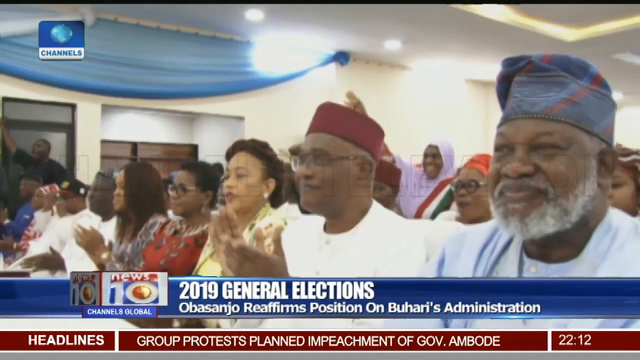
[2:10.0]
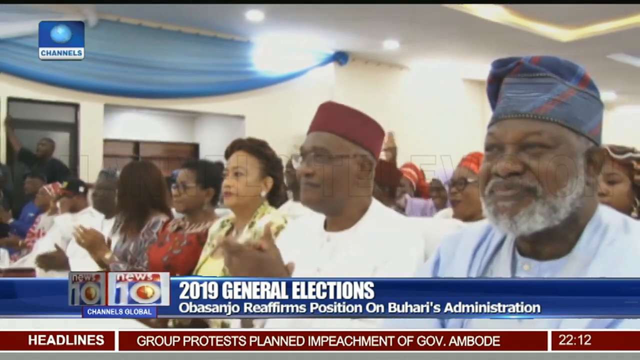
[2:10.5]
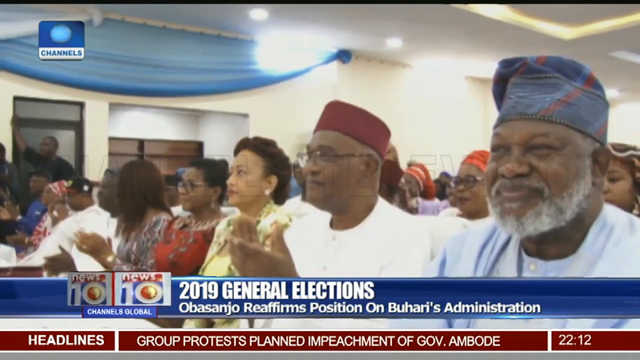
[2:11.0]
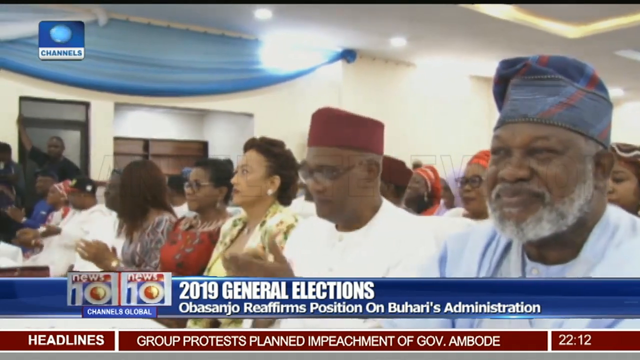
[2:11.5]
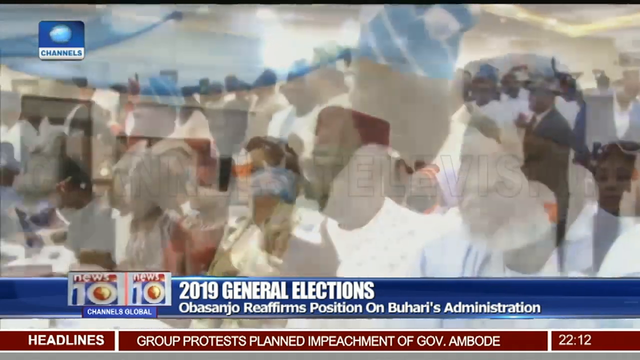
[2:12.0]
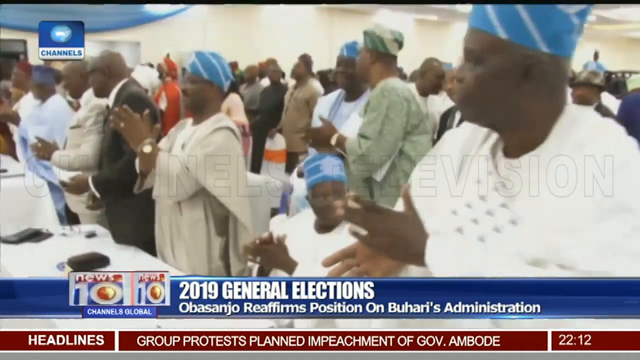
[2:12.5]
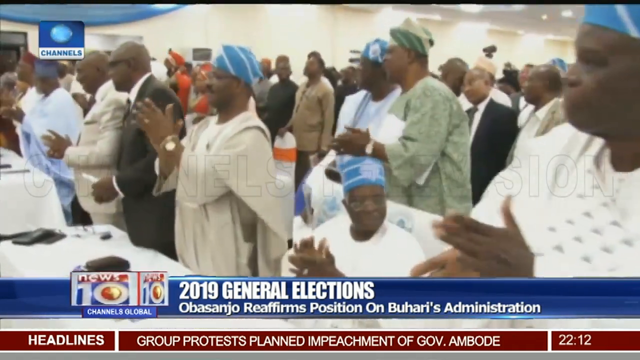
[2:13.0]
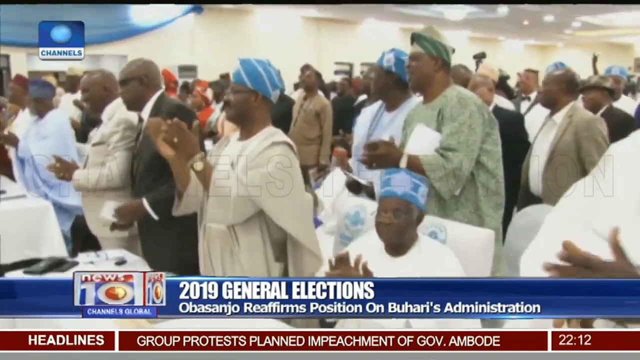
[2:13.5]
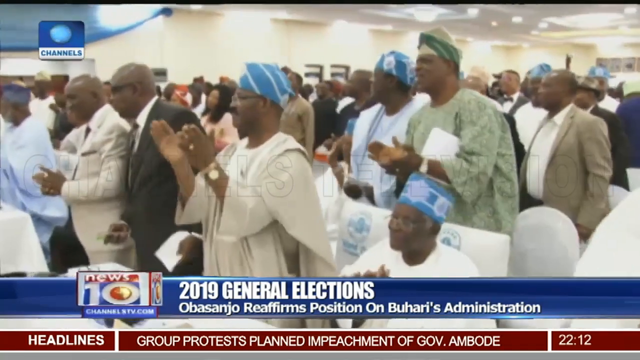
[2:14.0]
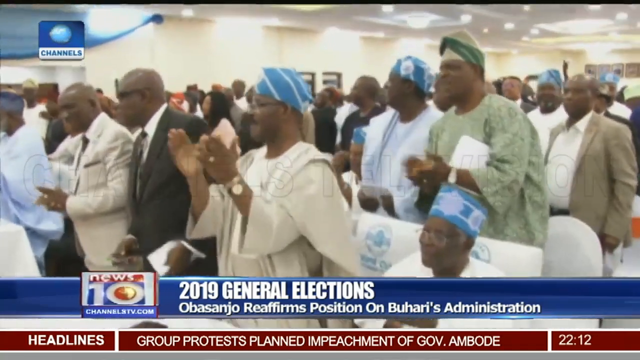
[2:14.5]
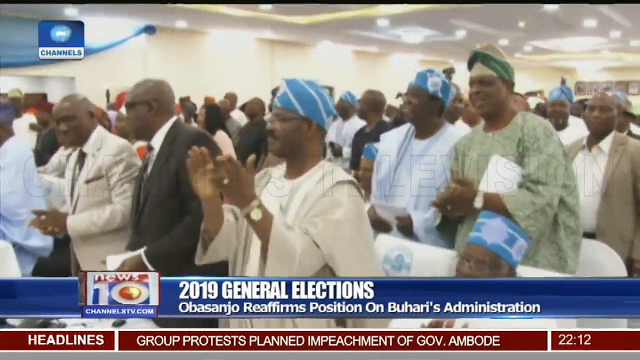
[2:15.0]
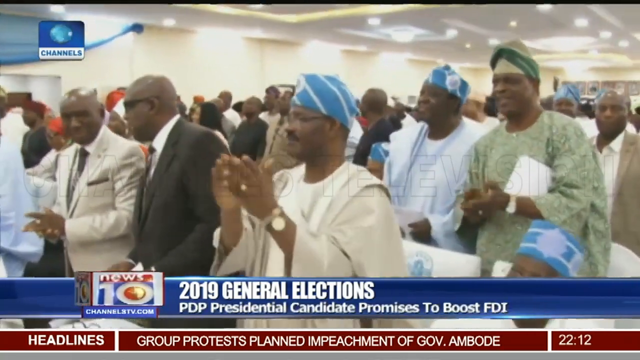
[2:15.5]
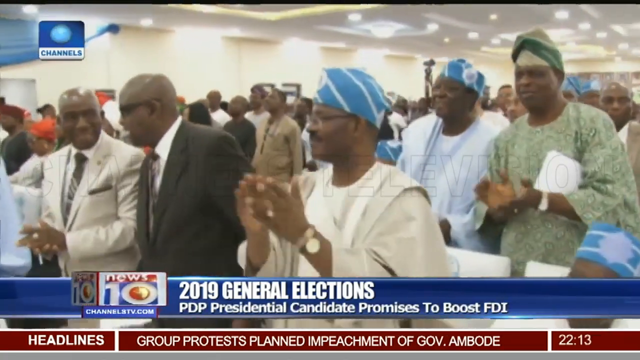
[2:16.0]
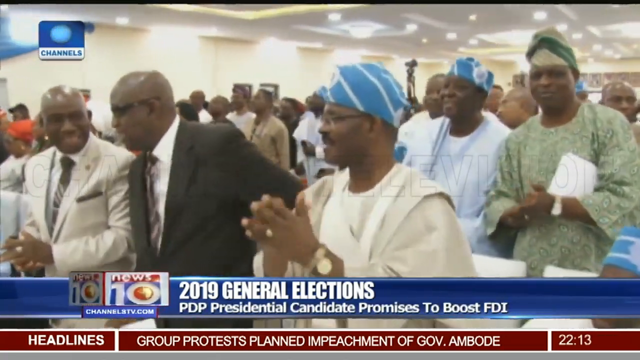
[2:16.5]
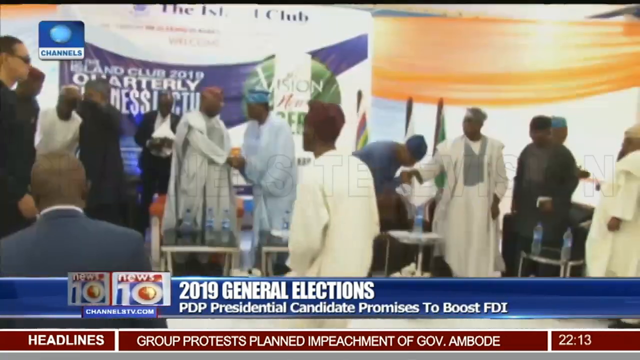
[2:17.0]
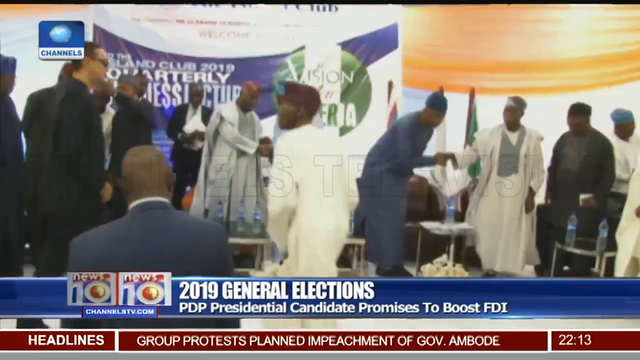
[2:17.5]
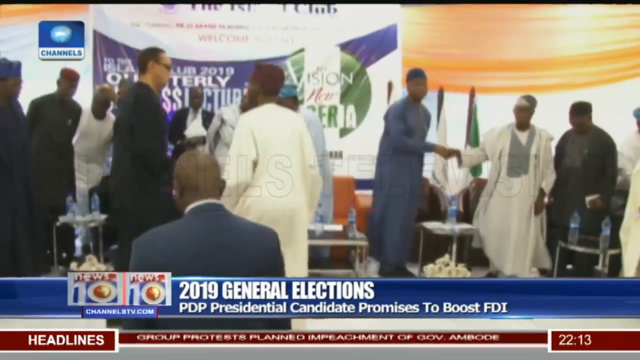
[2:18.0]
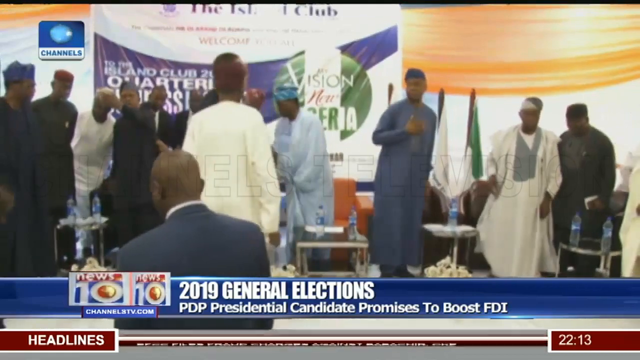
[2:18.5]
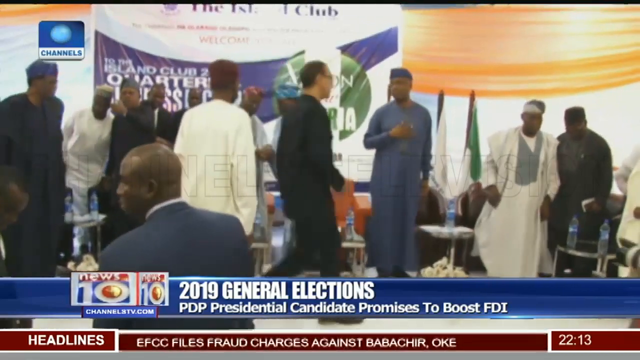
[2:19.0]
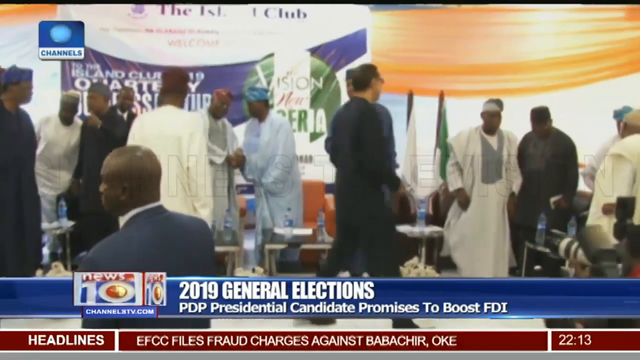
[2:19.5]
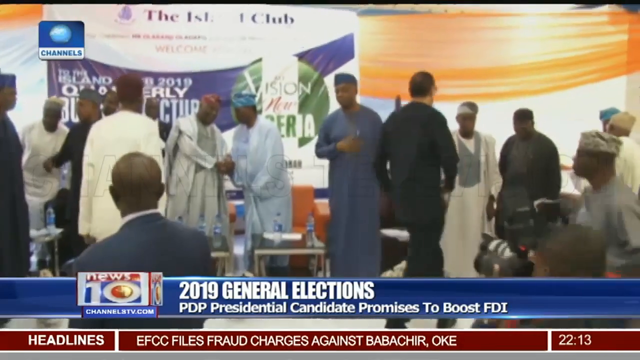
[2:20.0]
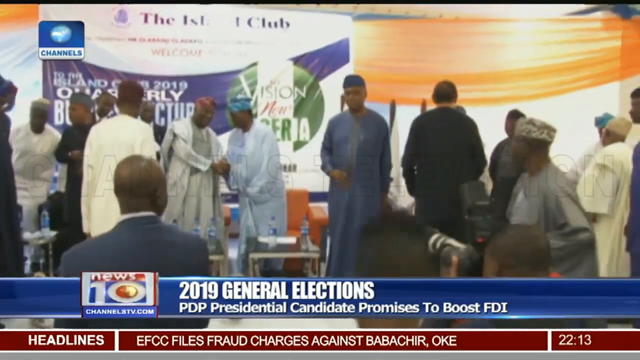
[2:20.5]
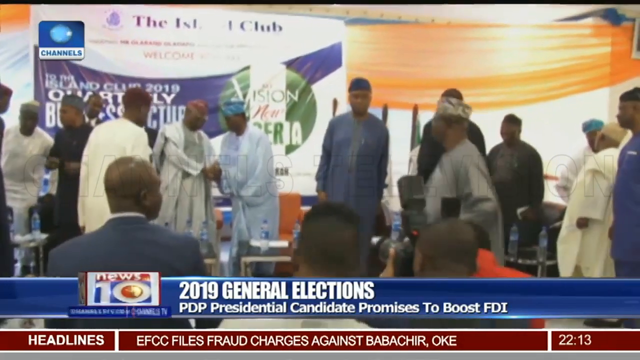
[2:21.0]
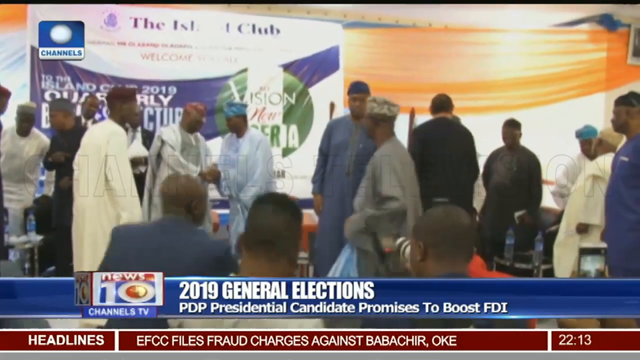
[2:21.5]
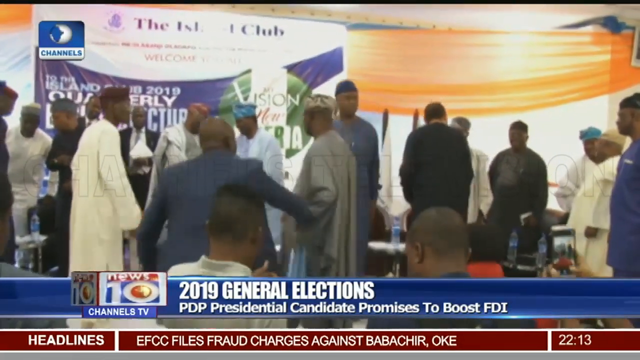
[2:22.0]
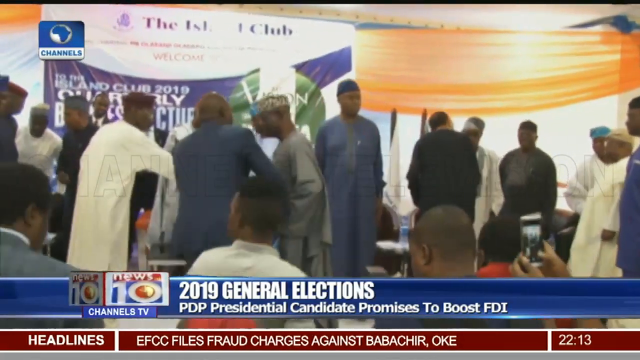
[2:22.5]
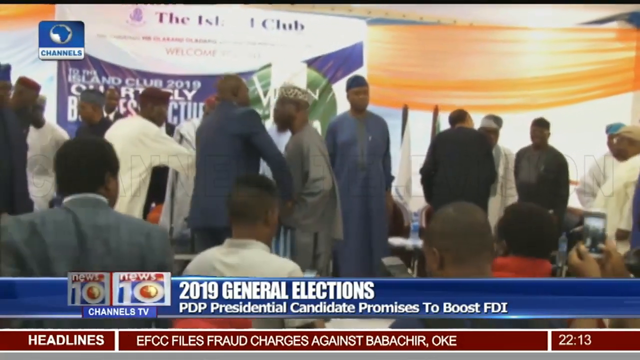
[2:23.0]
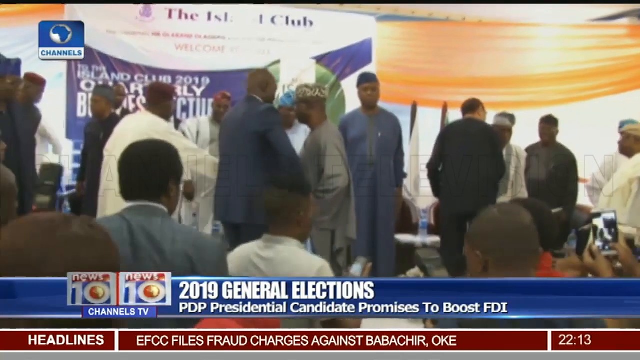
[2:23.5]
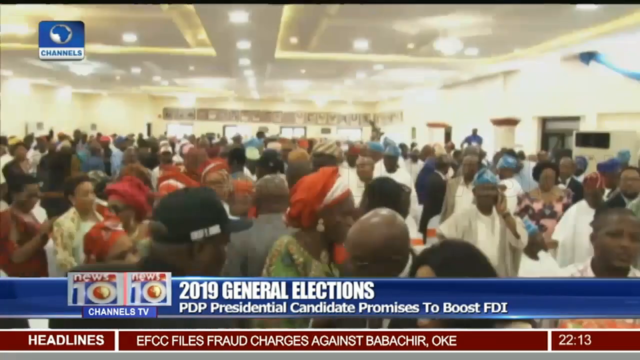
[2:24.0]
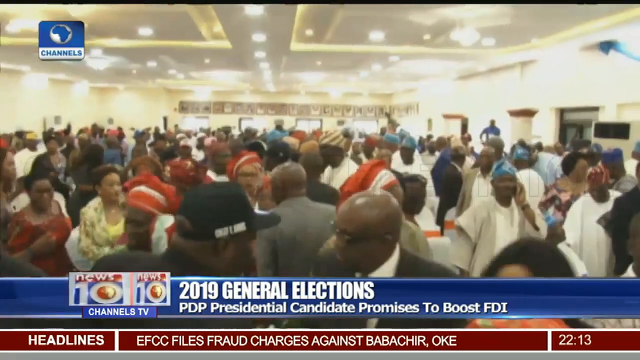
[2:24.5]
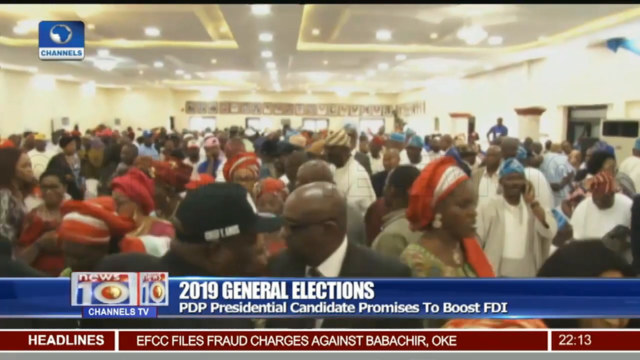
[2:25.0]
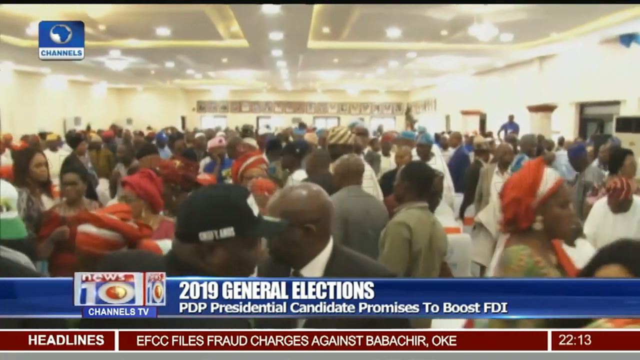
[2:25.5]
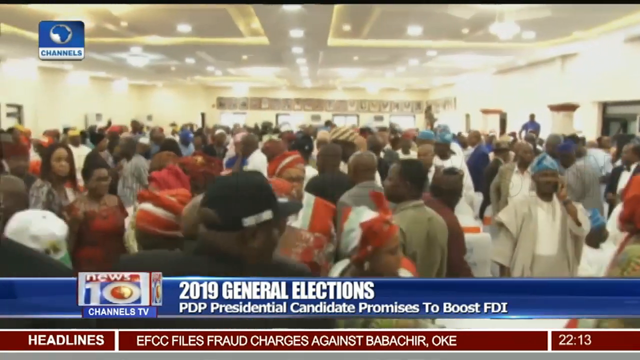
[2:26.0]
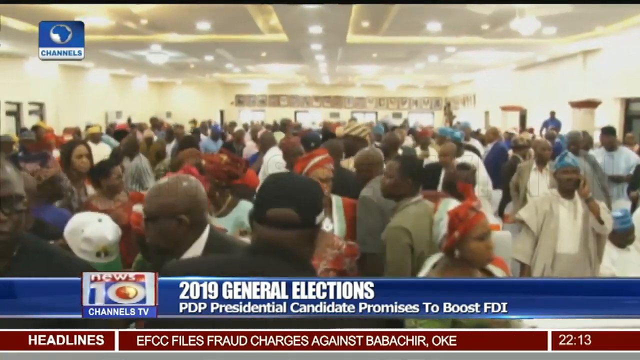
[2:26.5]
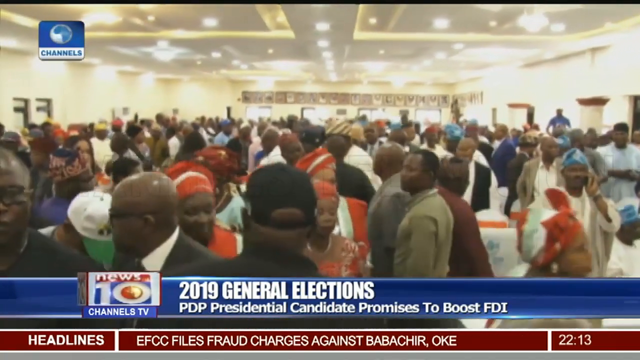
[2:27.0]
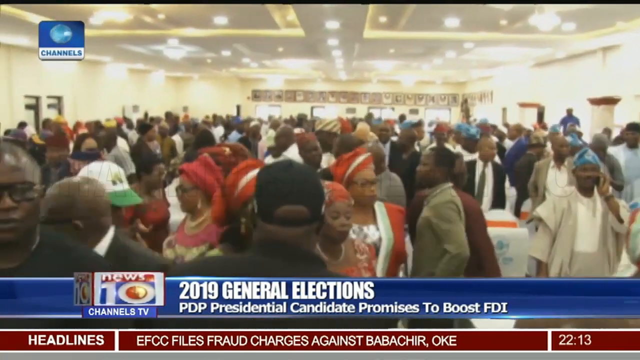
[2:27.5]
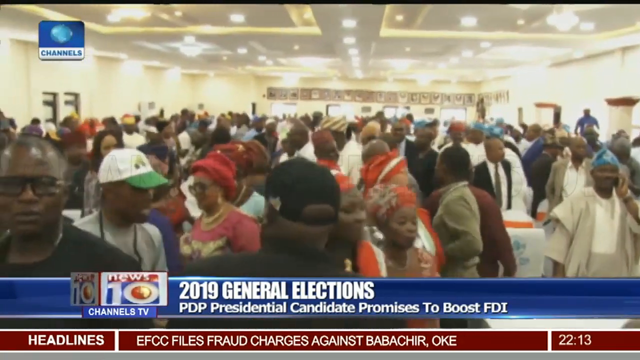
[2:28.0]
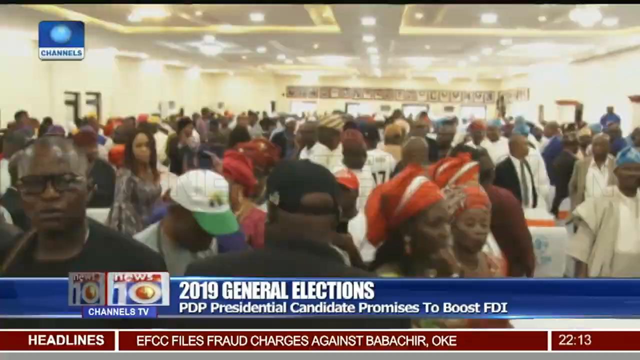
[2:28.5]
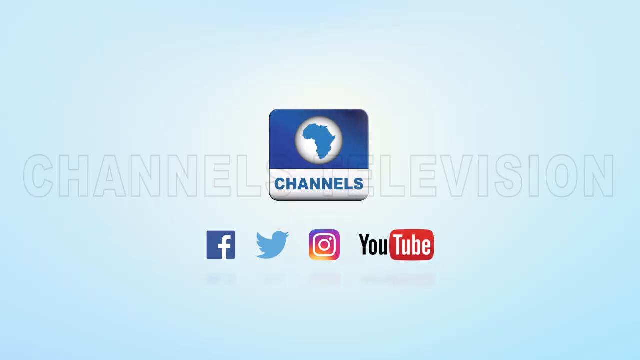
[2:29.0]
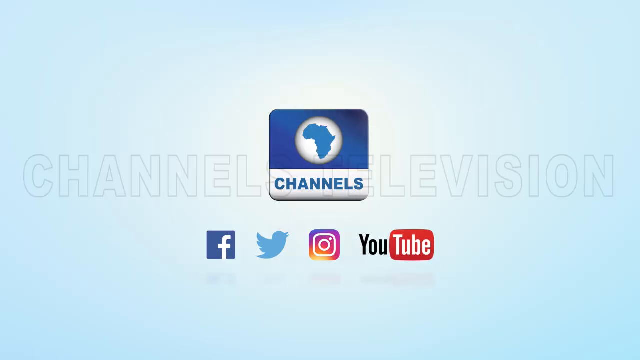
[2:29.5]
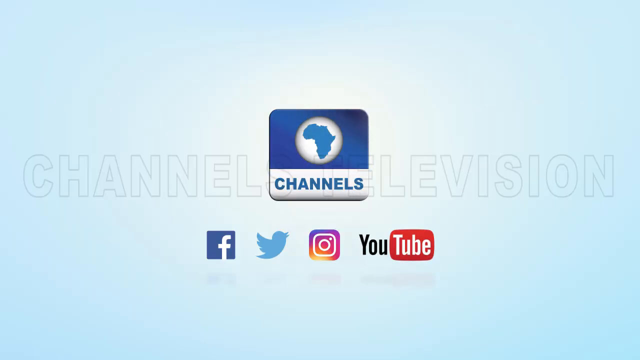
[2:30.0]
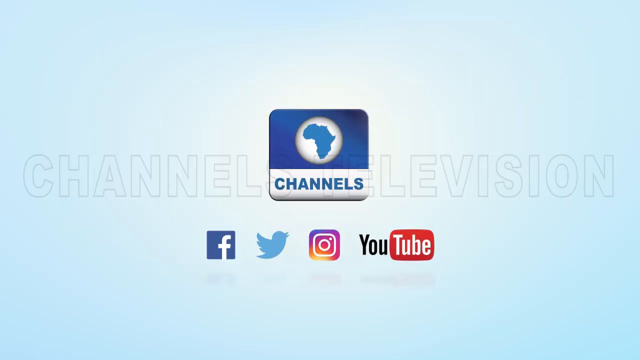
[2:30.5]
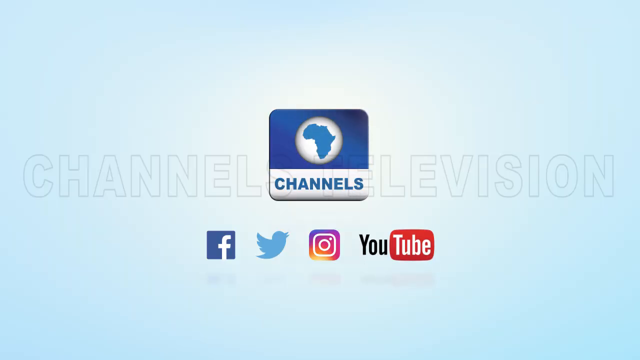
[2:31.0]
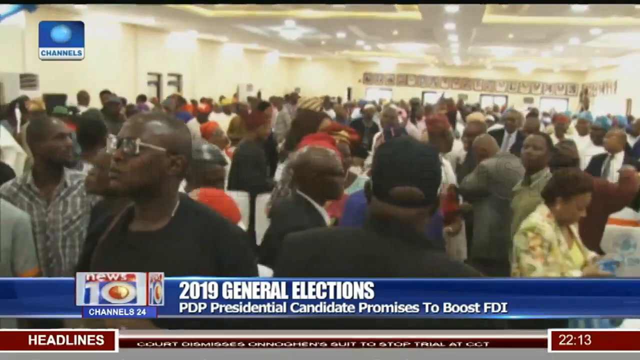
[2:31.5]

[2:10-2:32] There is a wall and a voting box. In front of the votes is a man who wears glasses and a t-shirt. A woman has her hair and whole body covered by her dress. Most of those who cover their faces and hair are girls. At the end, people are voting.